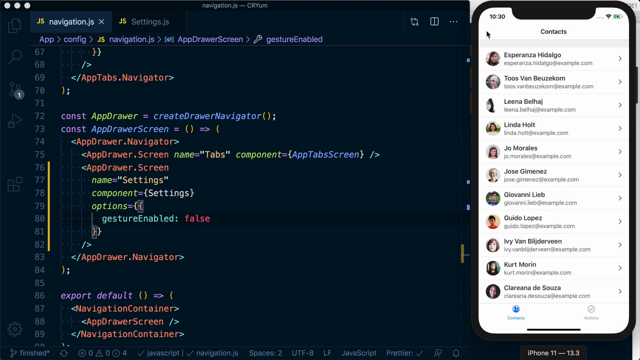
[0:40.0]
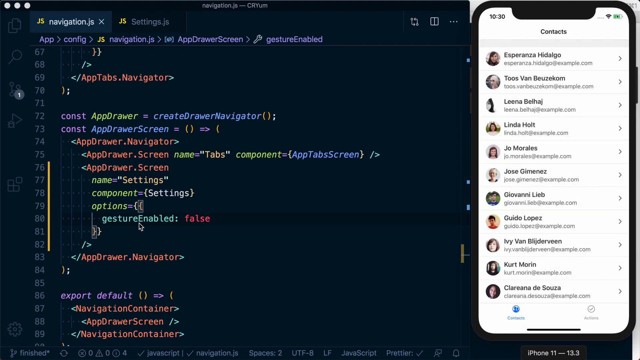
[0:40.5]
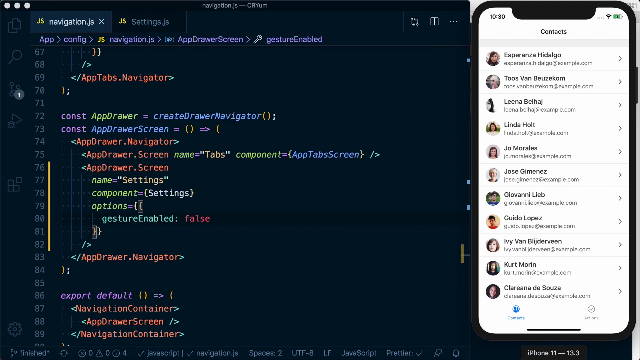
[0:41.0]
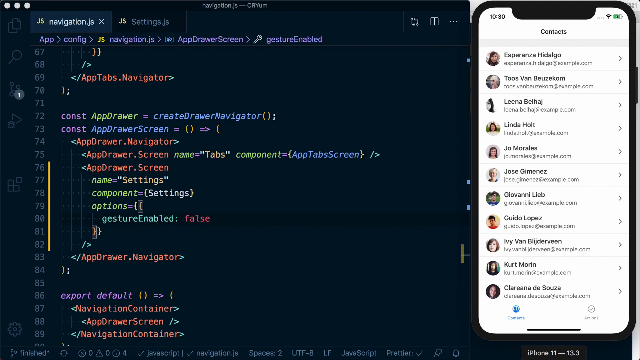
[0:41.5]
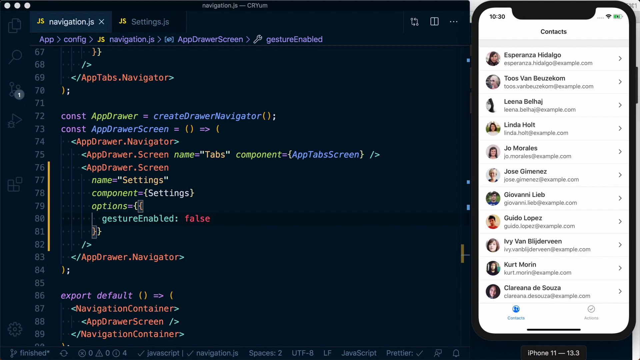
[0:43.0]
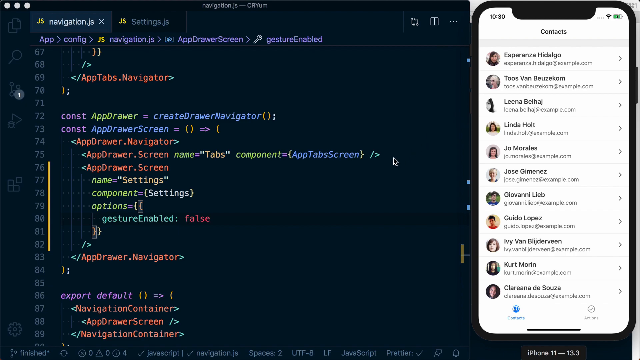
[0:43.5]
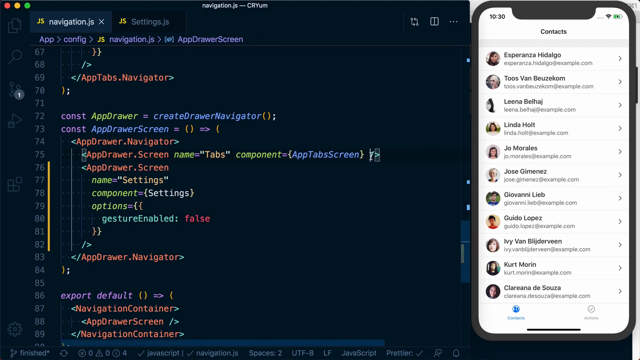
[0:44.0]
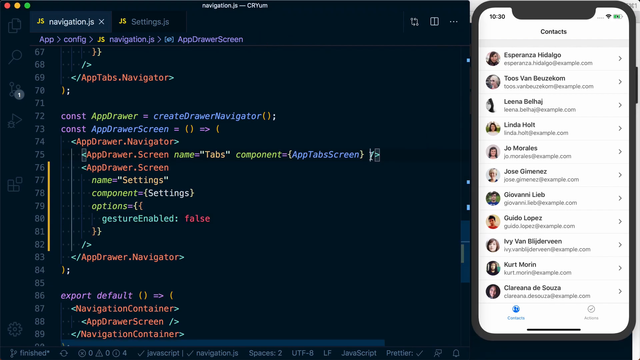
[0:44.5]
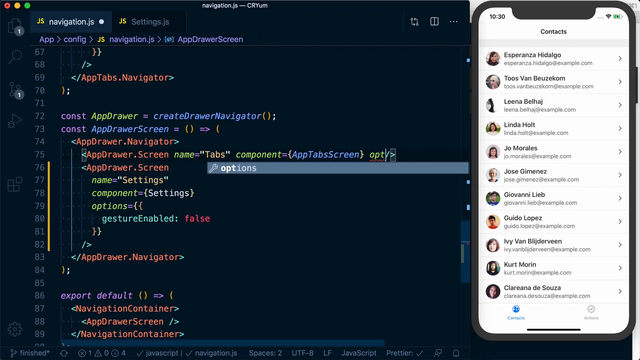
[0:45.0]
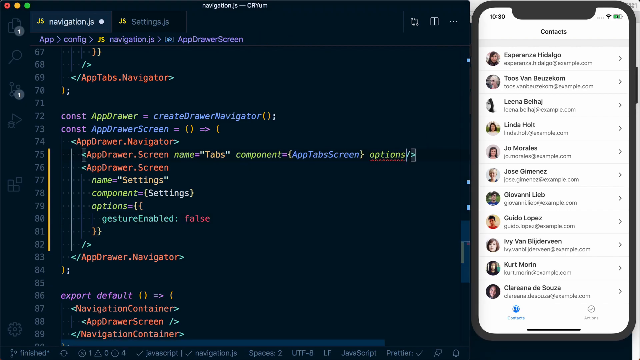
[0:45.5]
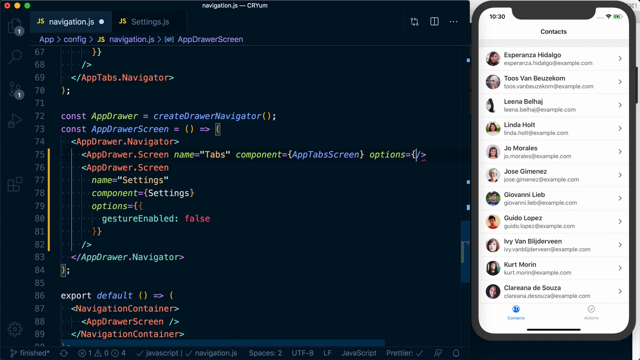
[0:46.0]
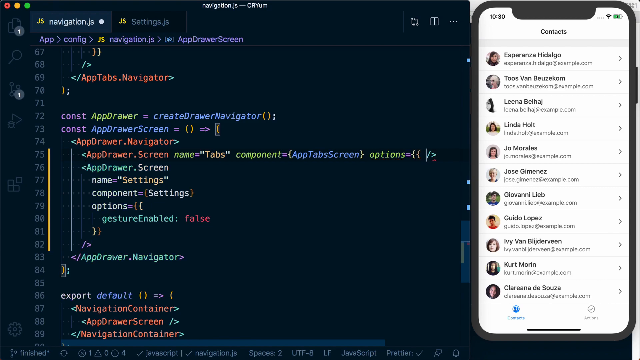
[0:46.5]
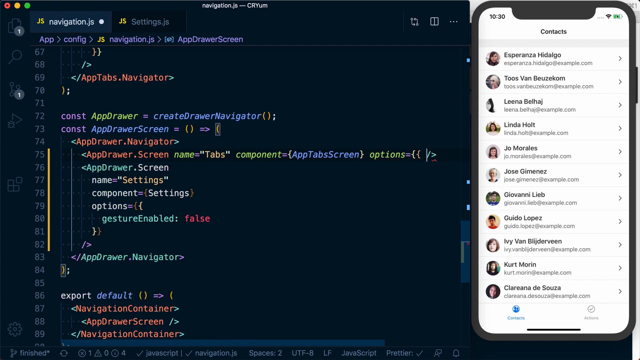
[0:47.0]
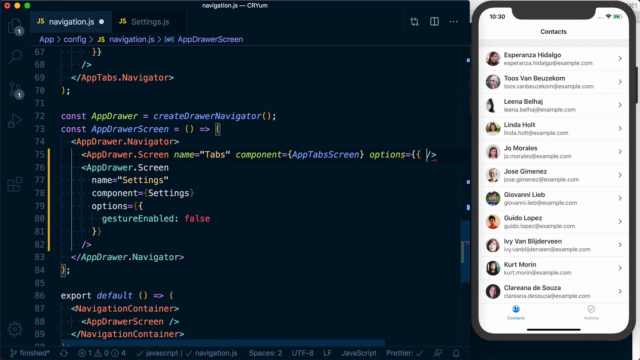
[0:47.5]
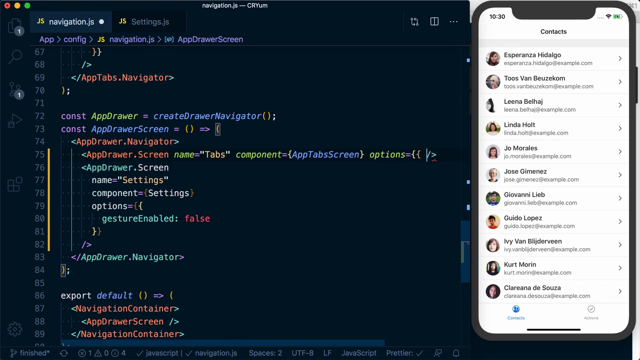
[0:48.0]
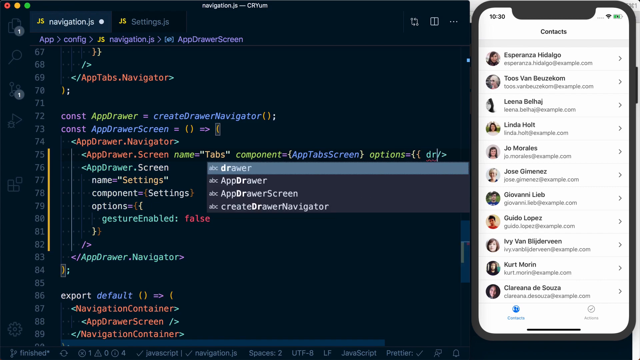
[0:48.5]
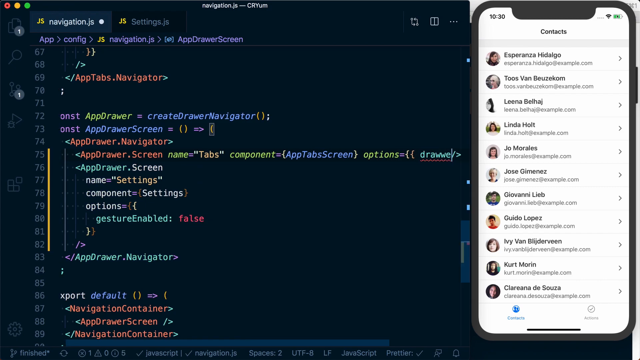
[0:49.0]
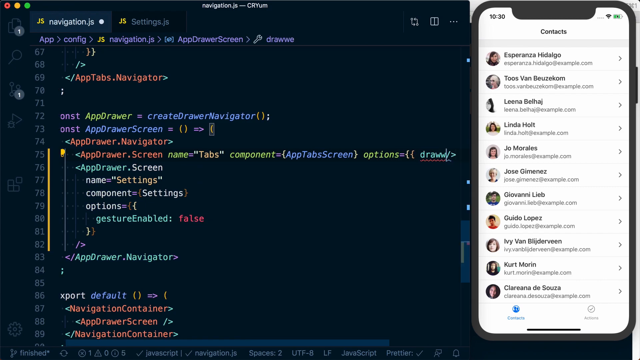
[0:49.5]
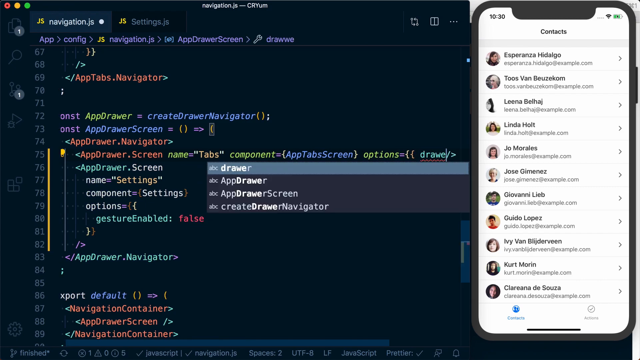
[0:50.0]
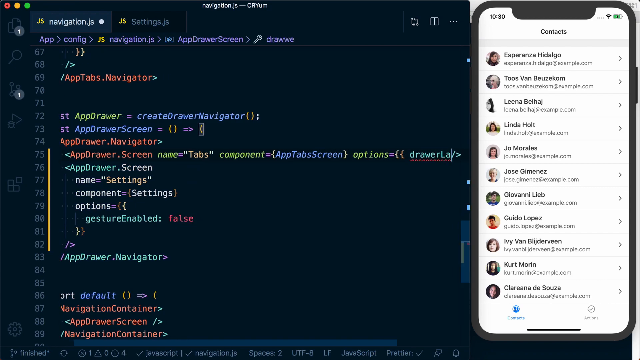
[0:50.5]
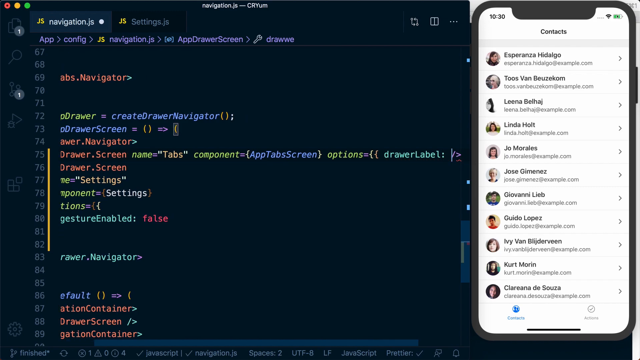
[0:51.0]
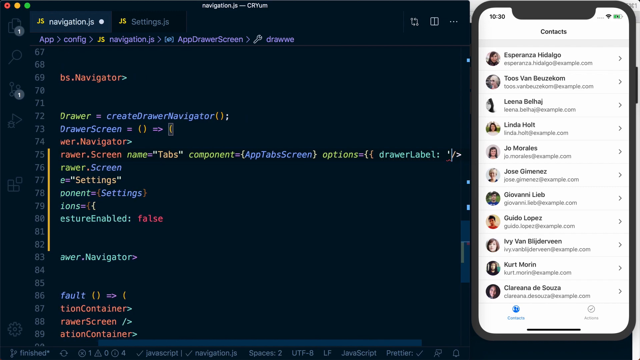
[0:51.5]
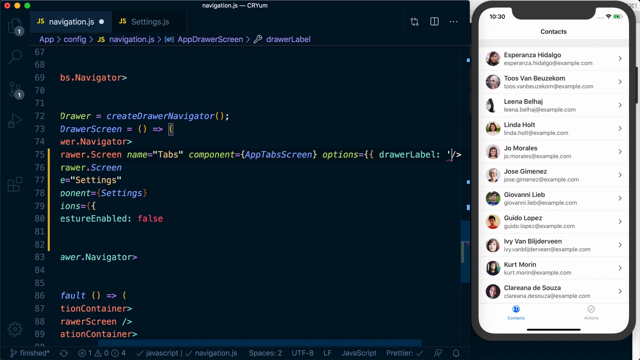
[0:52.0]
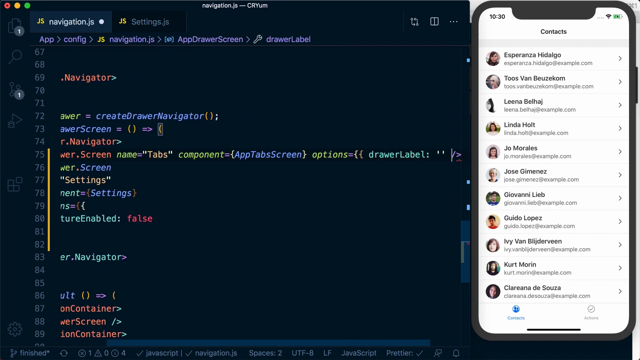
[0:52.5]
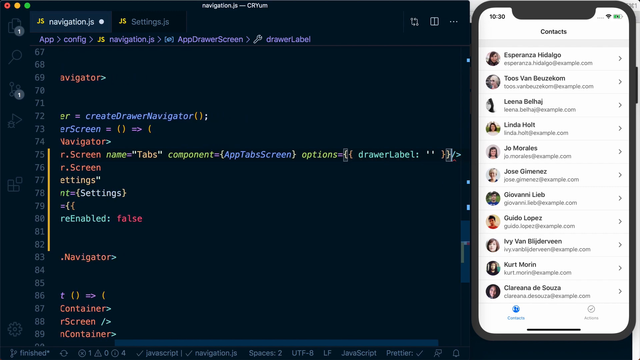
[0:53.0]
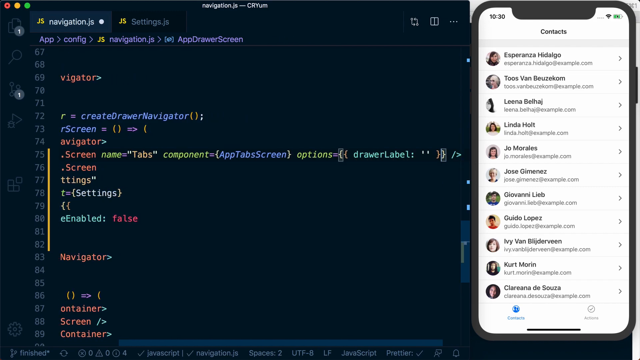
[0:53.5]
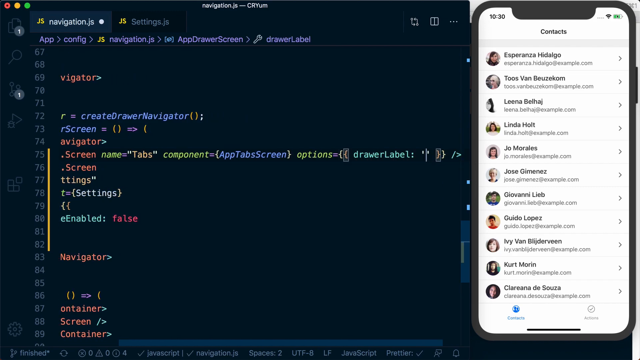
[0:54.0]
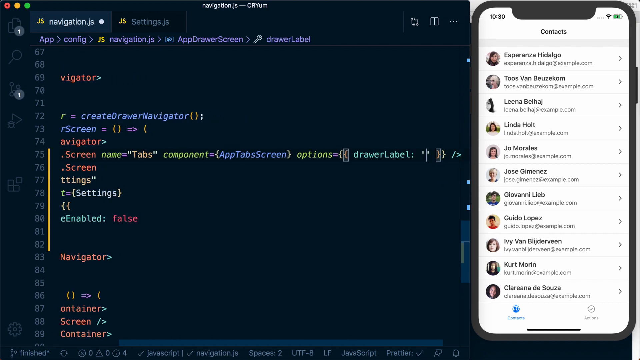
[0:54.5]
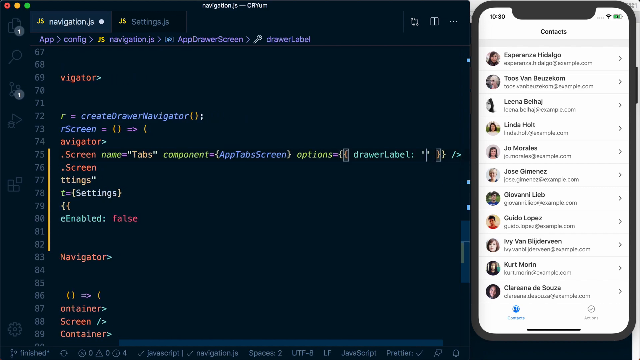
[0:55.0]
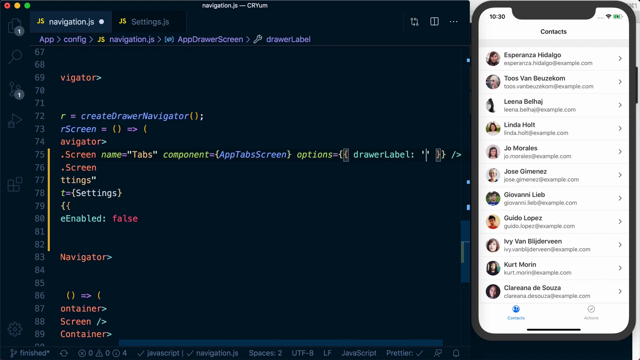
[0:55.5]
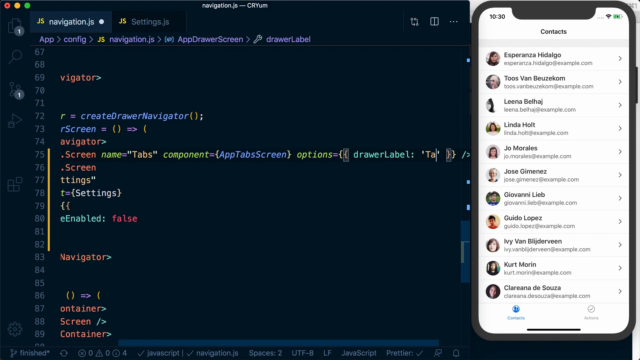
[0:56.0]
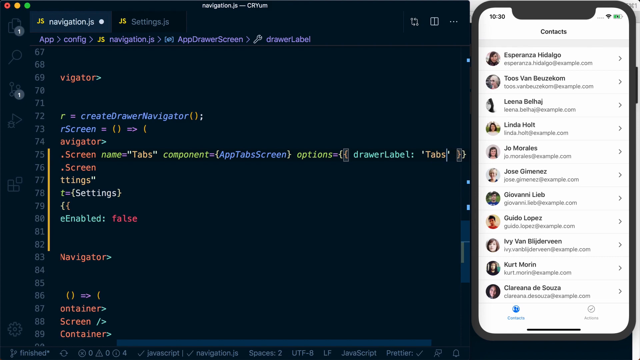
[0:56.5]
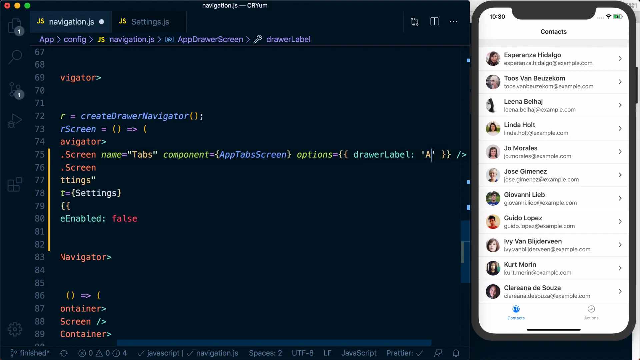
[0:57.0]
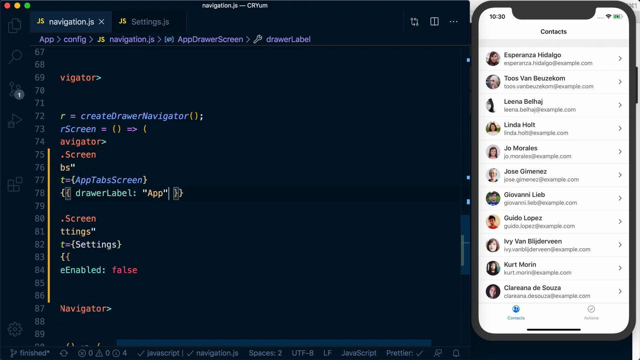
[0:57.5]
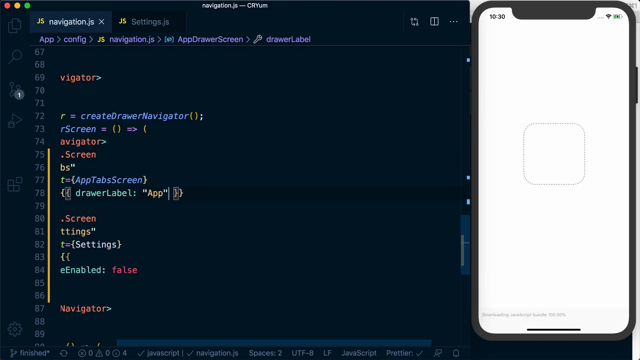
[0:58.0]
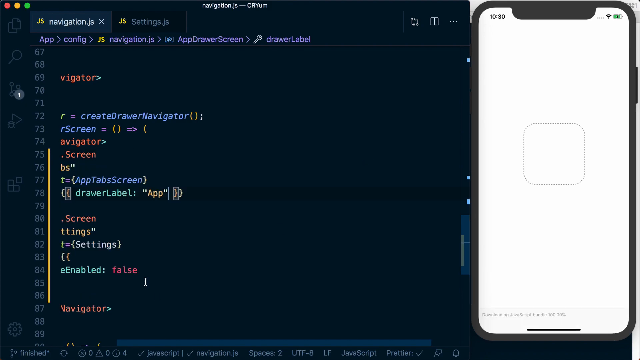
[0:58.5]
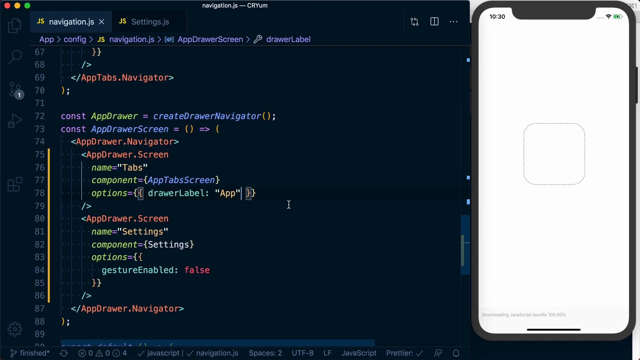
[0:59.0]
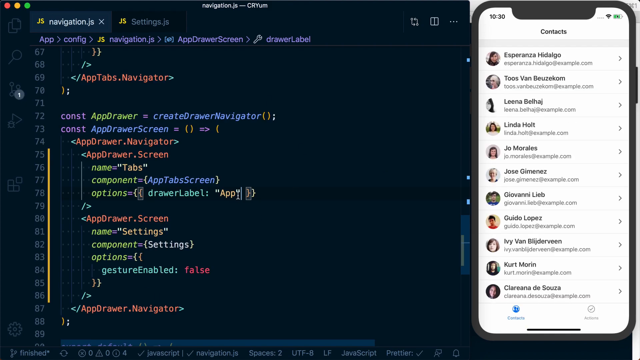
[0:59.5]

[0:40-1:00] Somebody is teaching how to code something called Navigator or Navigation.js on a black computer screen. On the left is code in purple, blue, orange and green, and on the right the contacts on their phone are shown, eleven contacts in all. Sometimes the cursor goes over to the phone; here it is over the code, where the person clicks options, types "options" and "drawer label", and the view scrolls through the middle, showing tabs and app. The phone then pops up again showing the contacts. The top of the black screen reads "navigation.js cr yum", the phone shows 10:30, and the code lines start at line 67 and go down into the 80s at the bottom, all in different colors.